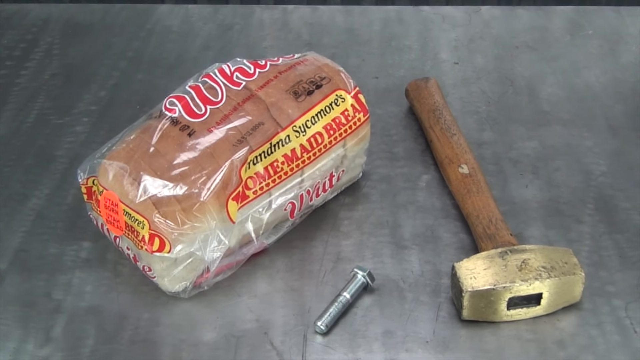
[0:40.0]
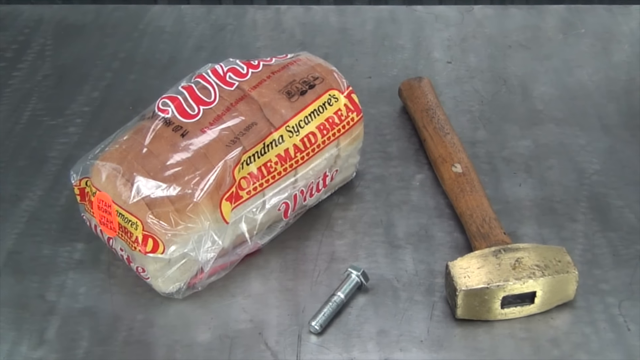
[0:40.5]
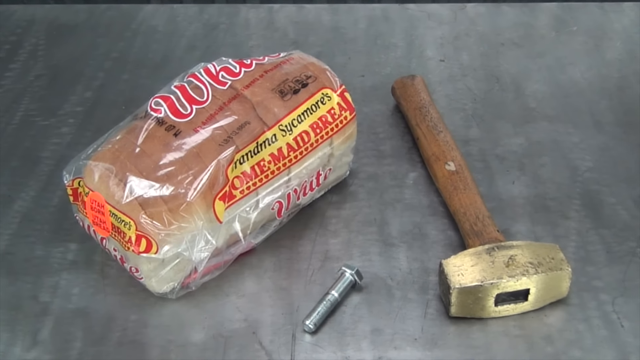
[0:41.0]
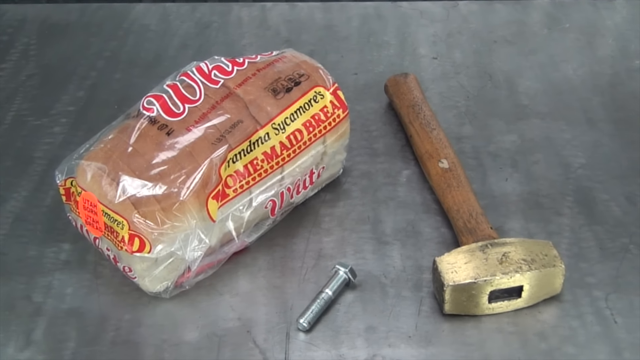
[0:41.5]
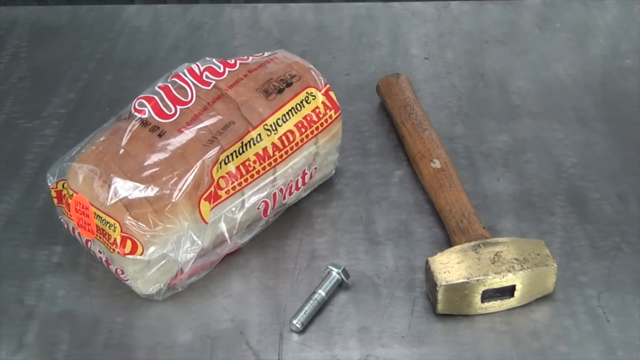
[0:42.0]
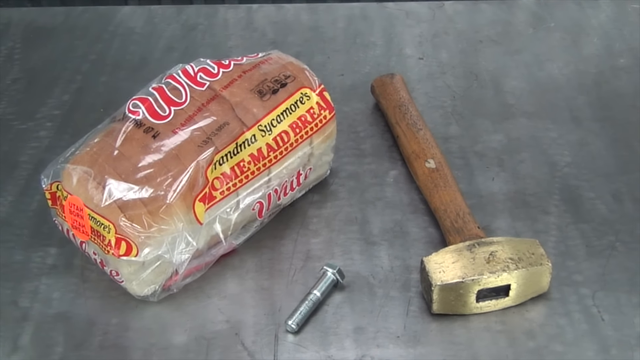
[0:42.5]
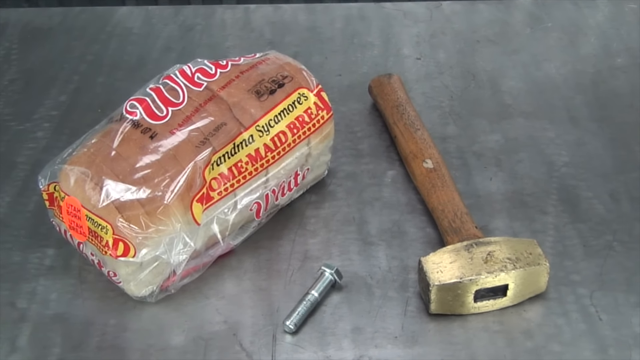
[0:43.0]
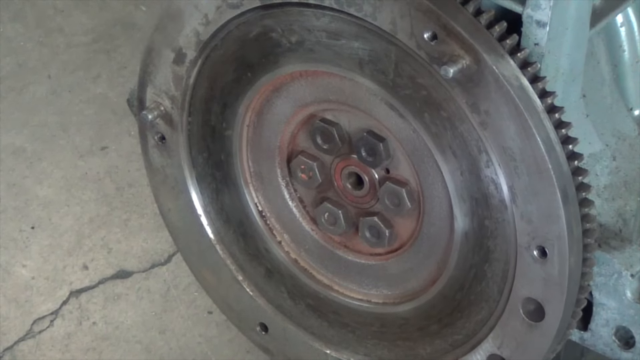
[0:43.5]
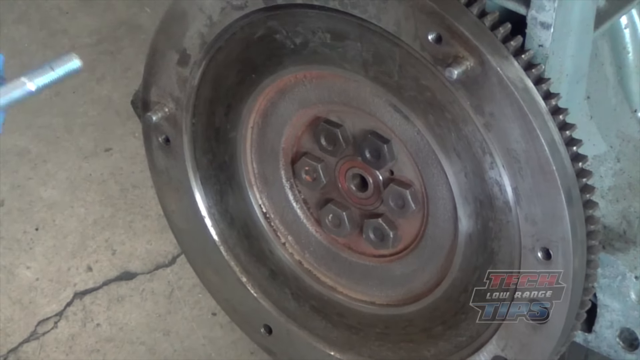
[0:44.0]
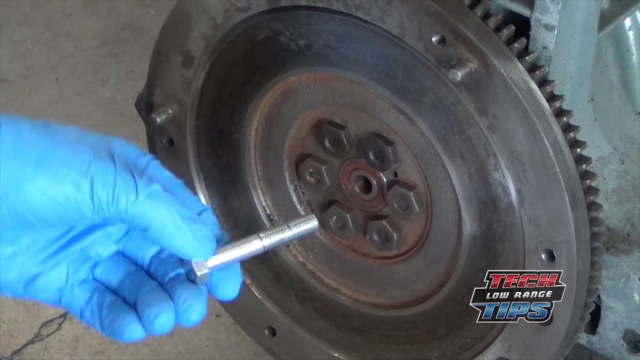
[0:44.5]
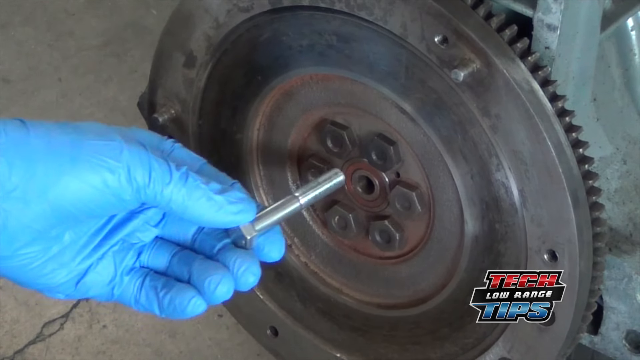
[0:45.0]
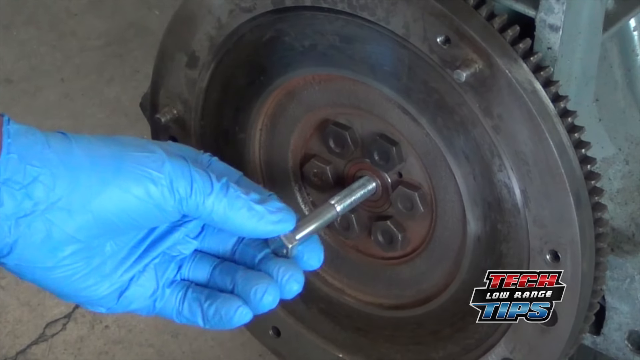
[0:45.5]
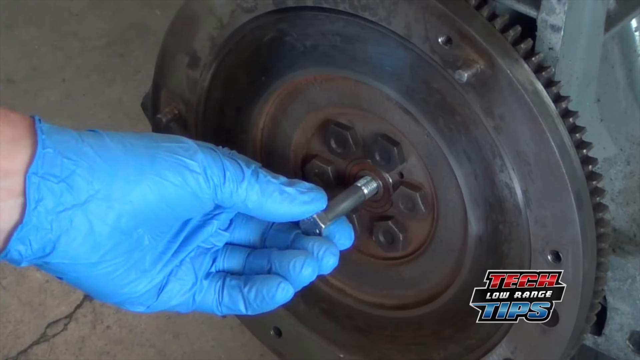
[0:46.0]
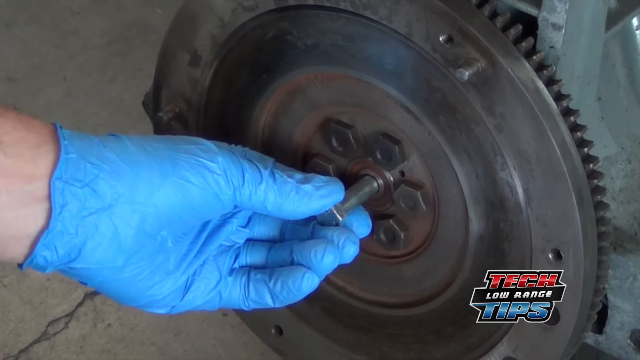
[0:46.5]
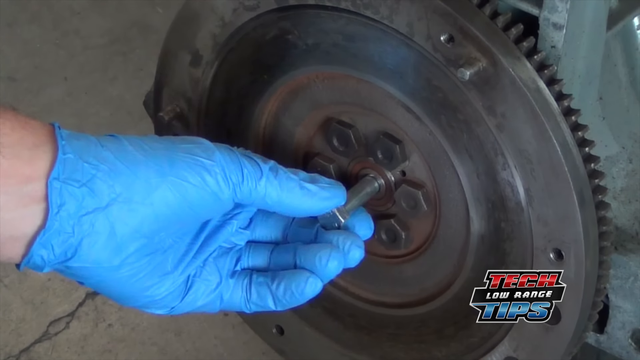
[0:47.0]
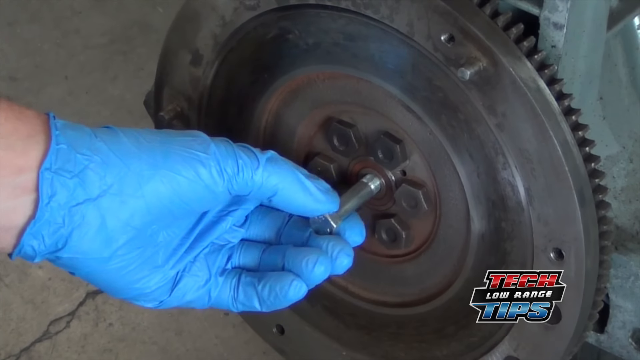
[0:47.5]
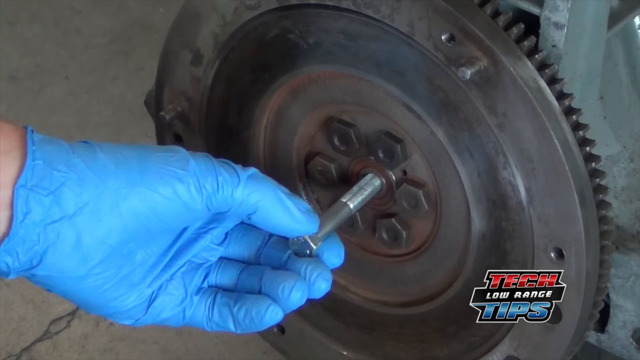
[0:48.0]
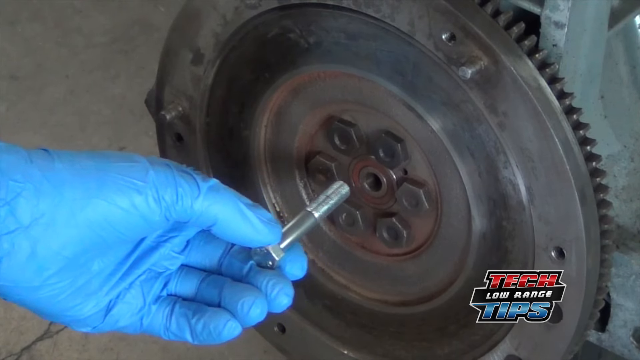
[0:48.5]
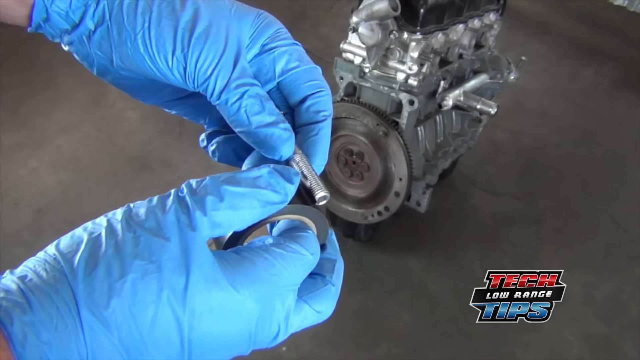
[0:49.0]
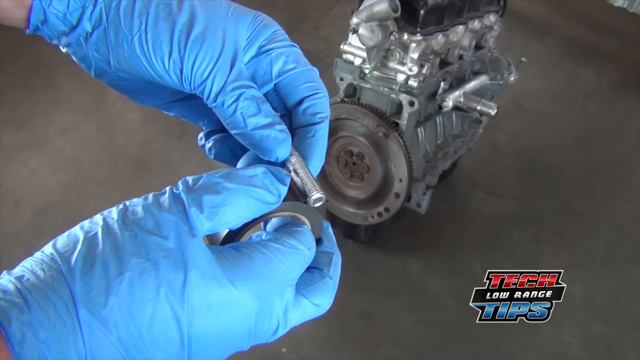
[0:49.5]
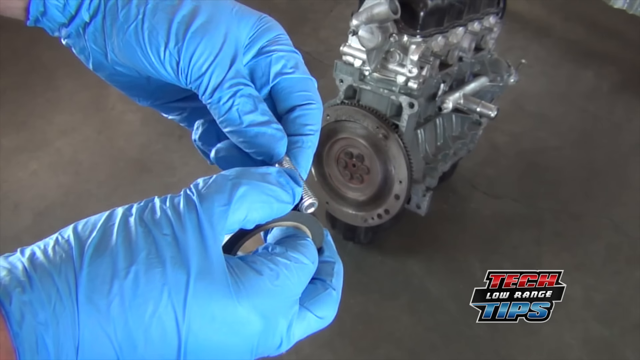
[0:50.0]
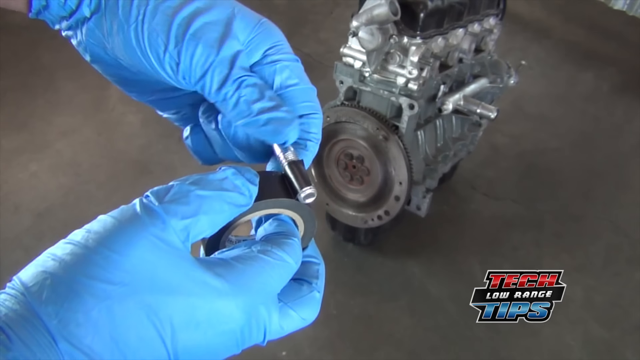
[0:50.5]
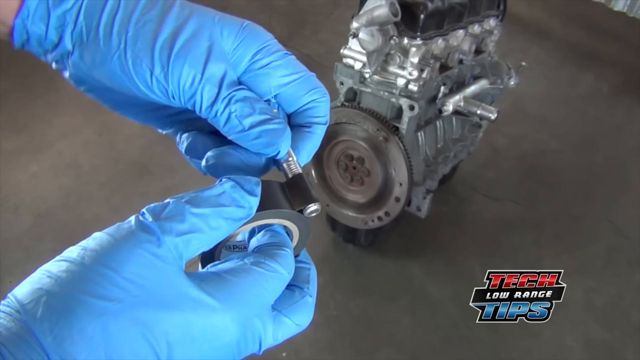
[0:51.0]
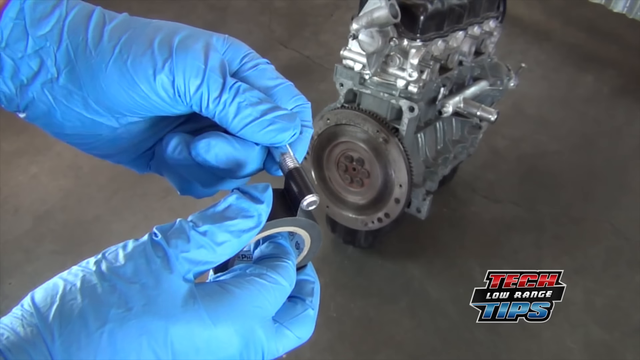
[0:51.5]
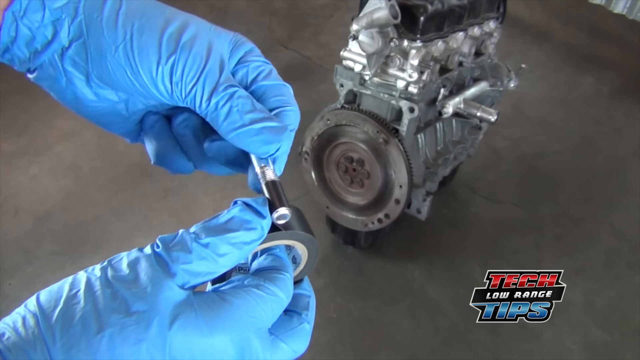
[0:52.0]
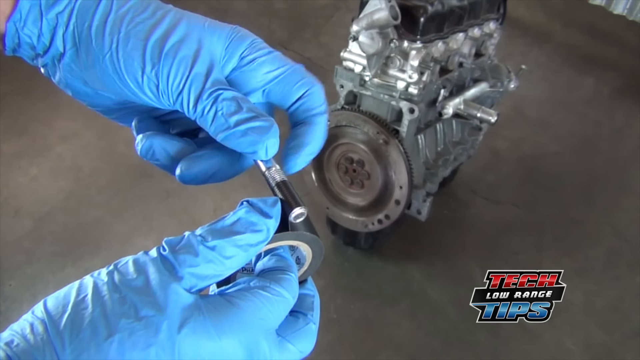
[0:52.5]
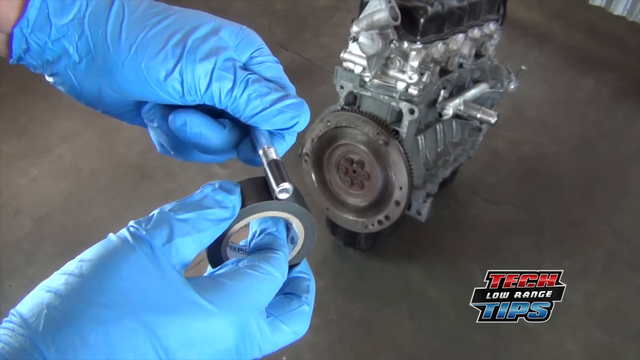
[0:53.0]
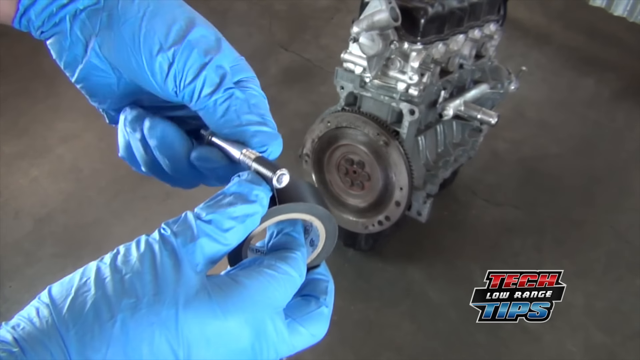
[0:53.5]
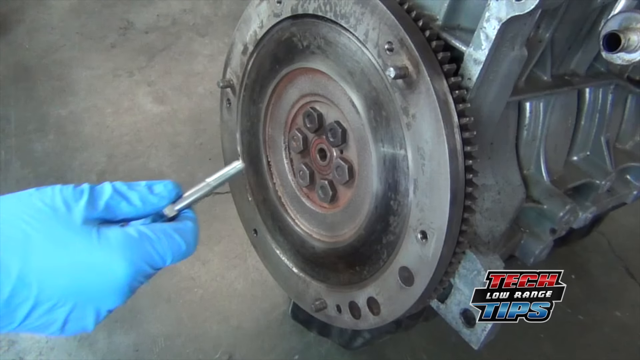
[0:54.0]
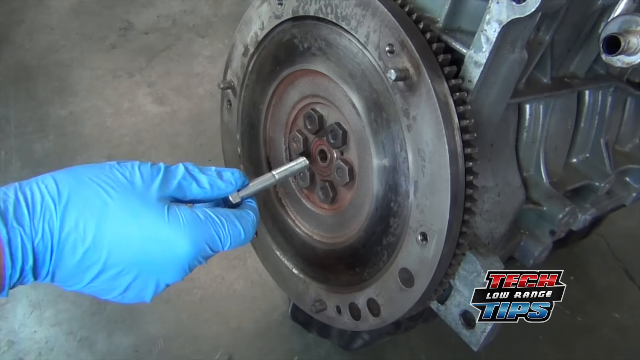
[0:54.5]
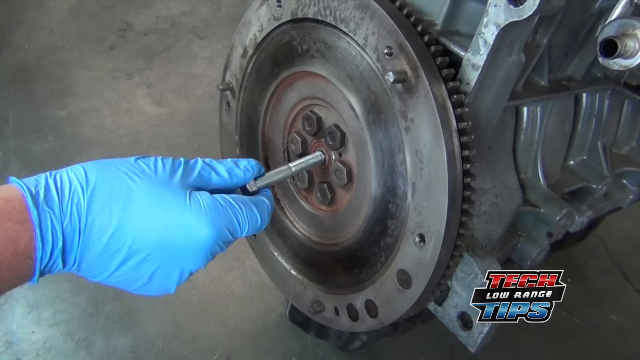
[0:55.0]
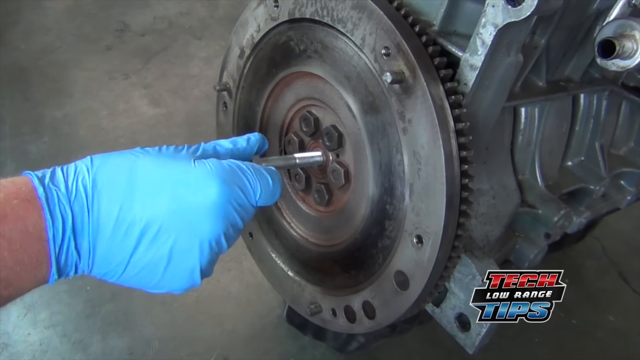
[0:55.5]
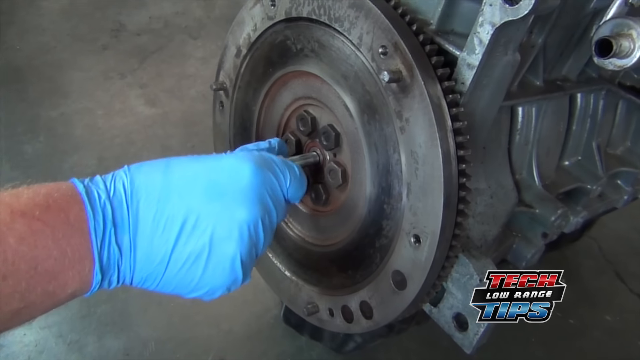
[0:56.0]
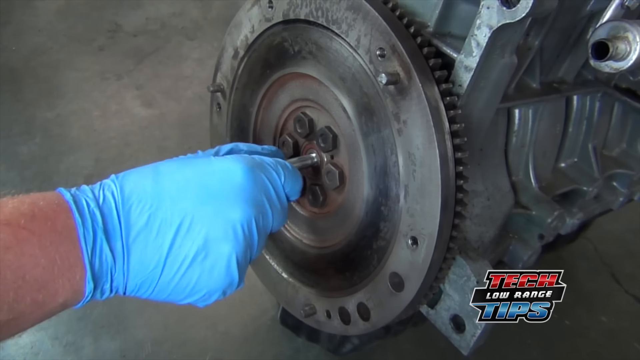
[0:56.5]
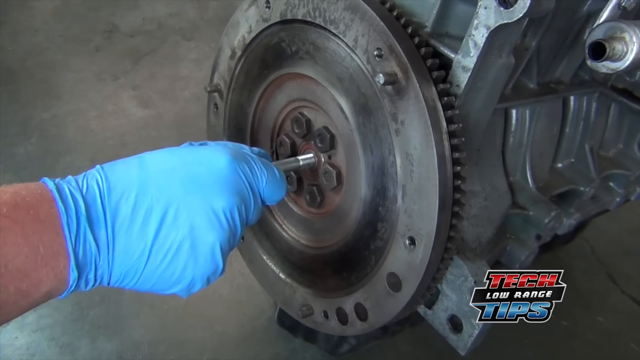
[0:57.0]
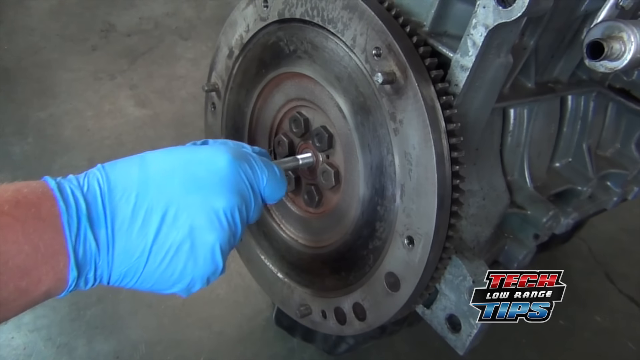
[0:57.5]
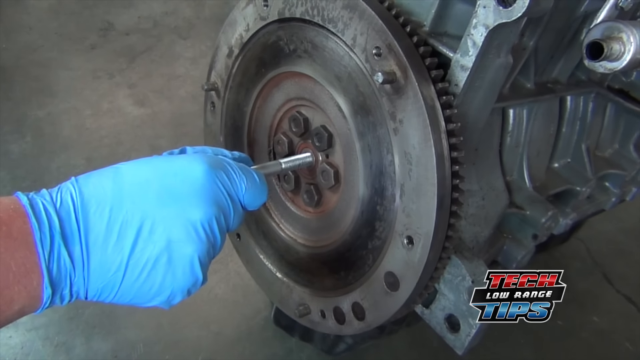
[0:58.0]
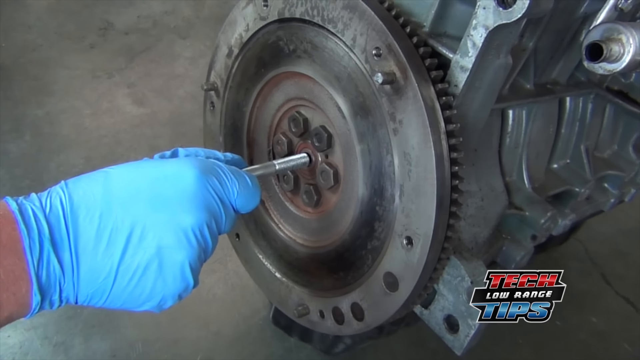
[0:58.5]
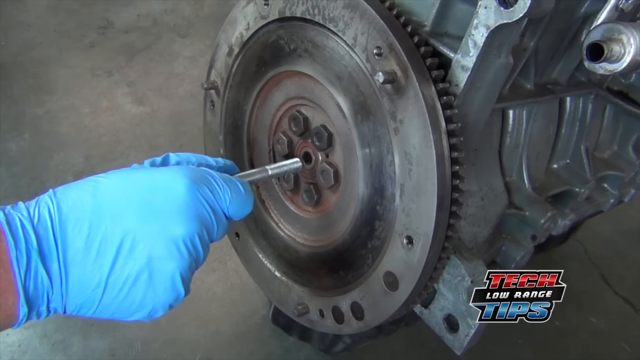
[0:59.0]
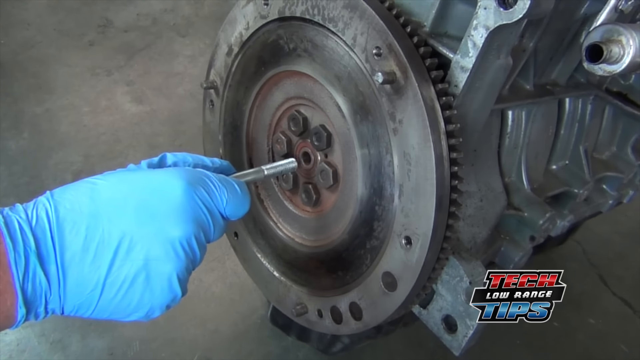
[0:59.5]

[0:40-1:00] The bag apparently says "wheat" as well. A hammer and a nail are on what looks like a gray table next to the bread; the hammer looks rusty. The little circular gadget appears, and someone wearing a blue glove tries to fit the screw into it. They then wrap black tape around it, apparently to make it fit, but it still won't fit.